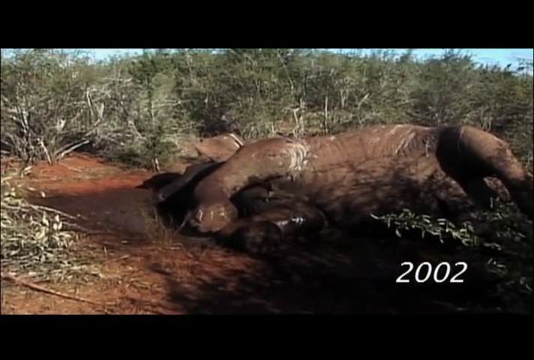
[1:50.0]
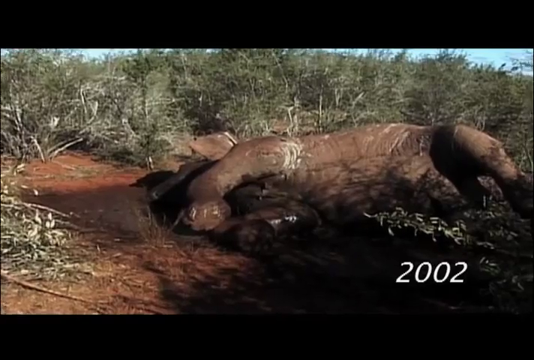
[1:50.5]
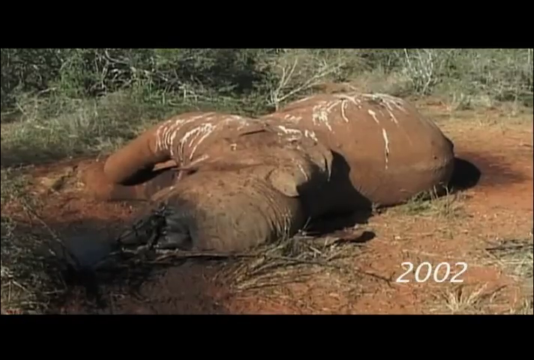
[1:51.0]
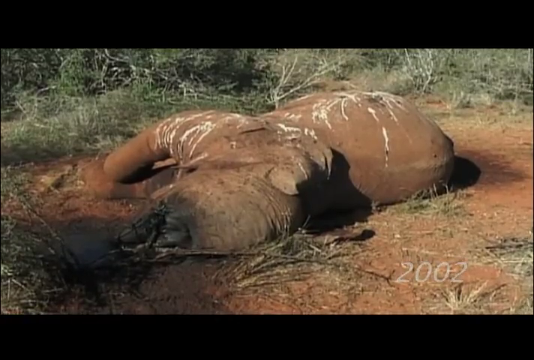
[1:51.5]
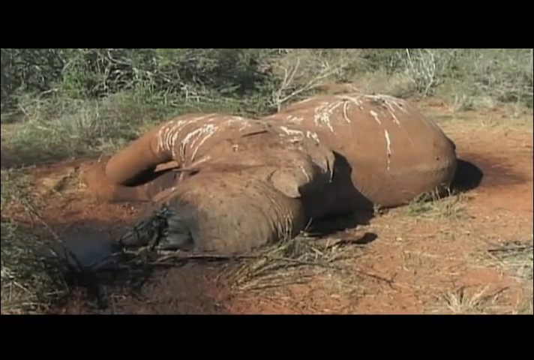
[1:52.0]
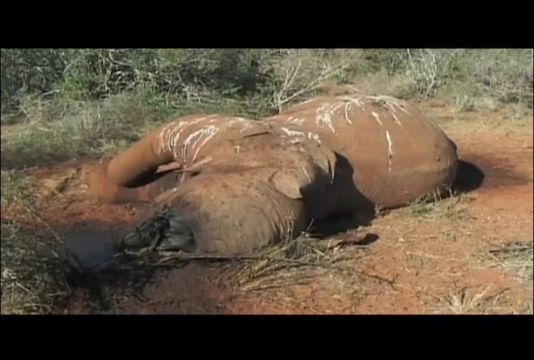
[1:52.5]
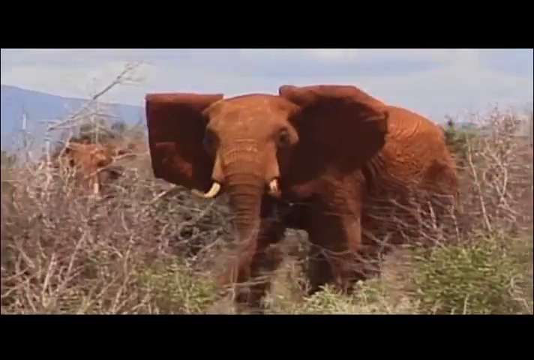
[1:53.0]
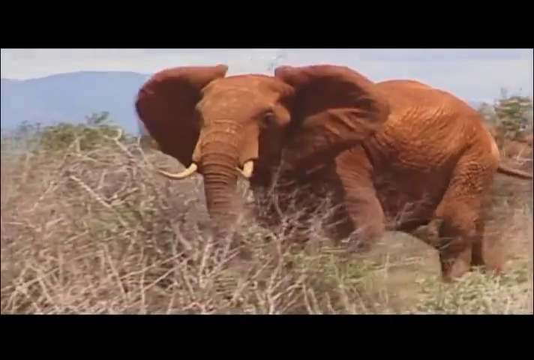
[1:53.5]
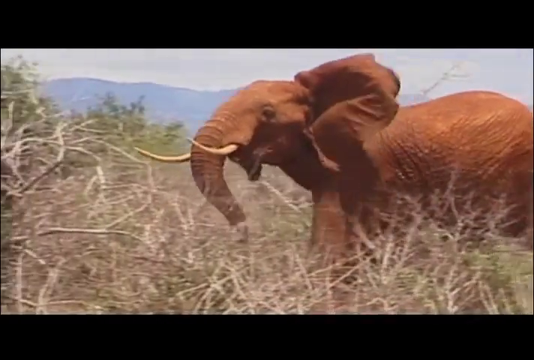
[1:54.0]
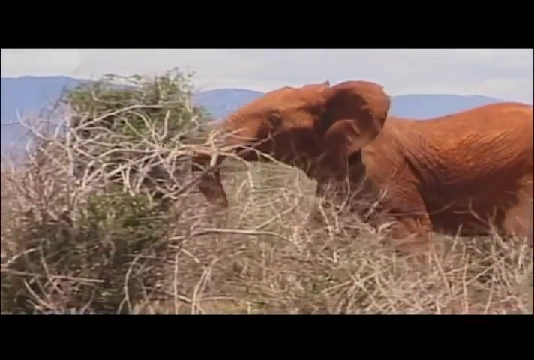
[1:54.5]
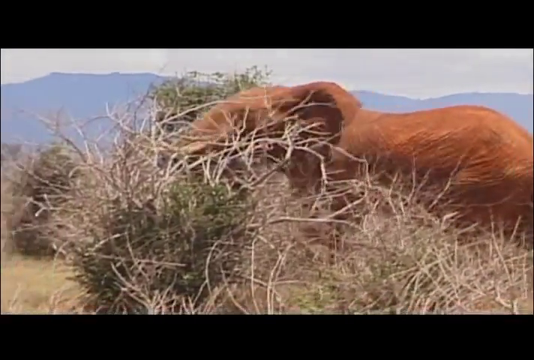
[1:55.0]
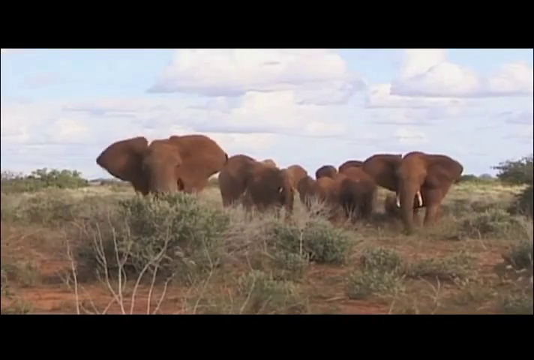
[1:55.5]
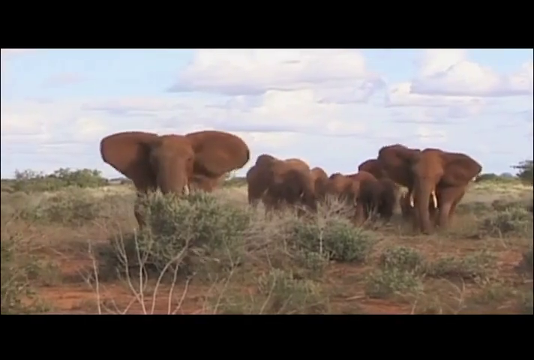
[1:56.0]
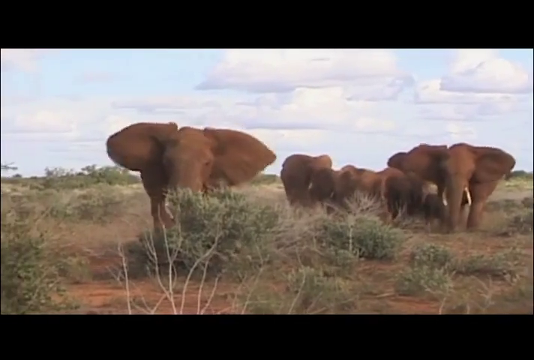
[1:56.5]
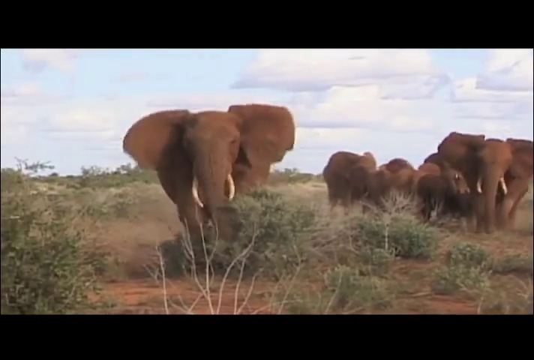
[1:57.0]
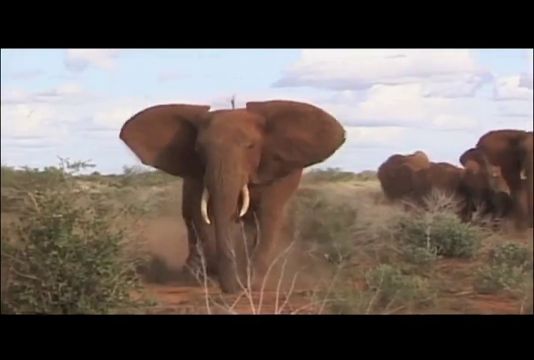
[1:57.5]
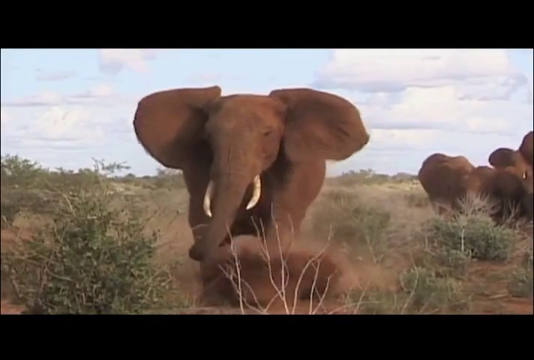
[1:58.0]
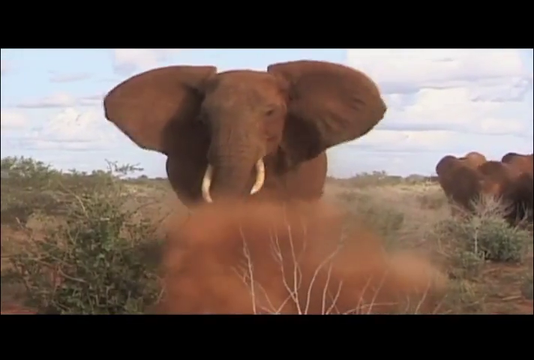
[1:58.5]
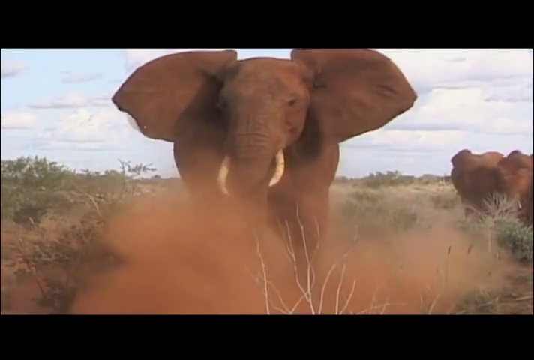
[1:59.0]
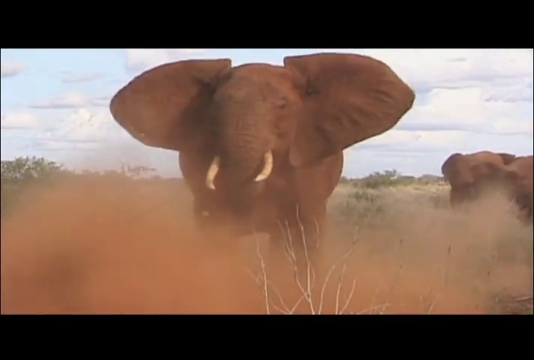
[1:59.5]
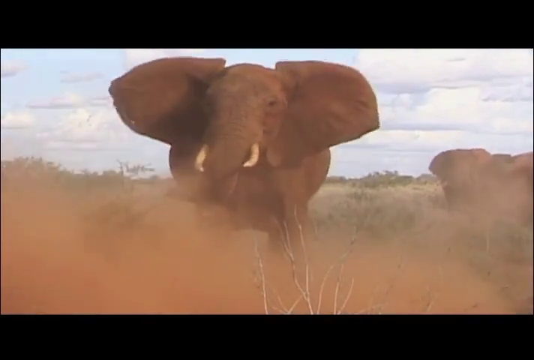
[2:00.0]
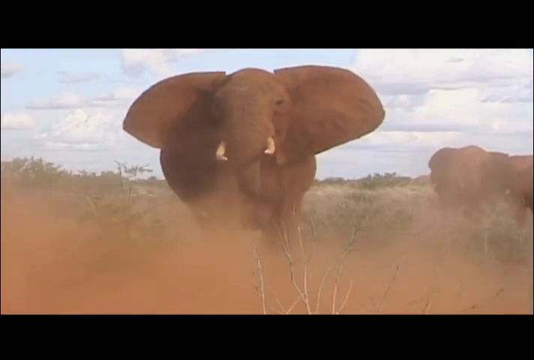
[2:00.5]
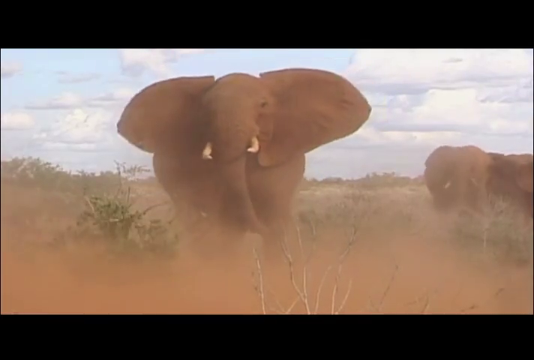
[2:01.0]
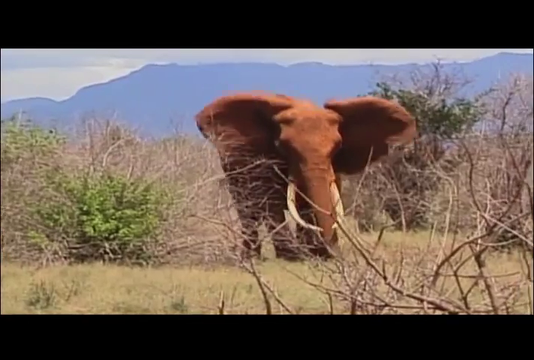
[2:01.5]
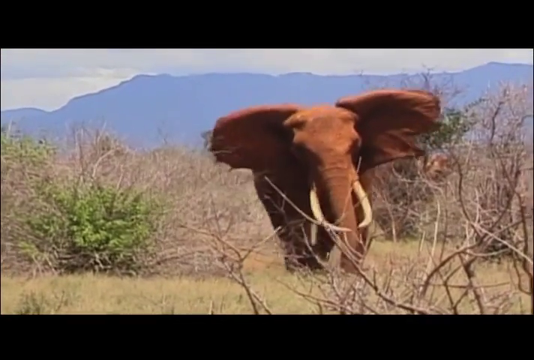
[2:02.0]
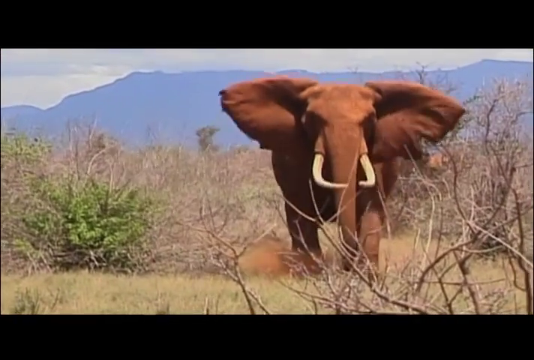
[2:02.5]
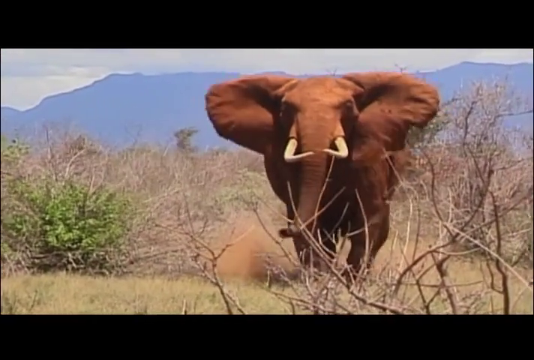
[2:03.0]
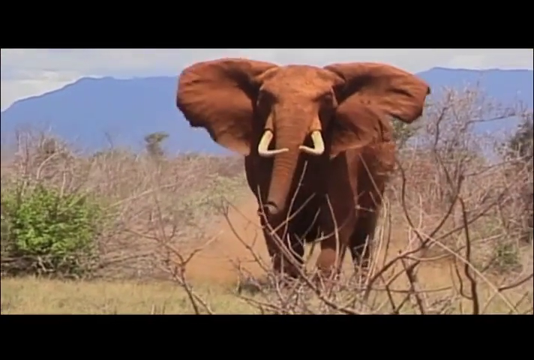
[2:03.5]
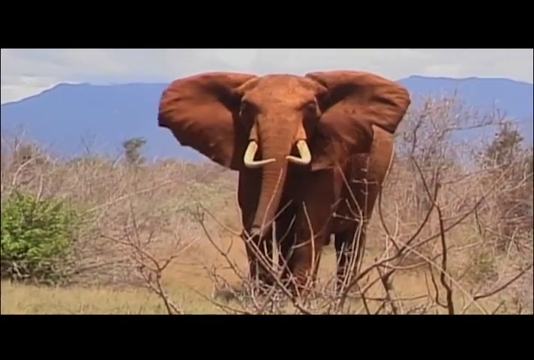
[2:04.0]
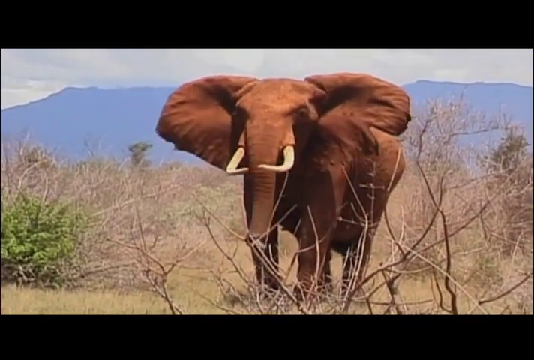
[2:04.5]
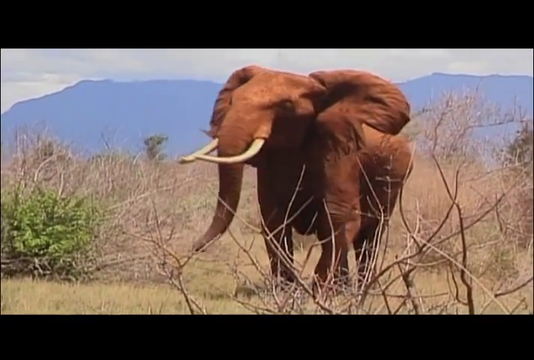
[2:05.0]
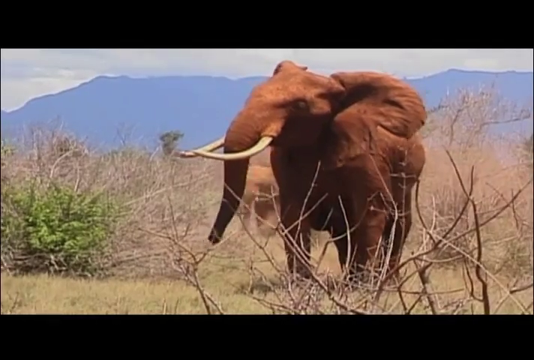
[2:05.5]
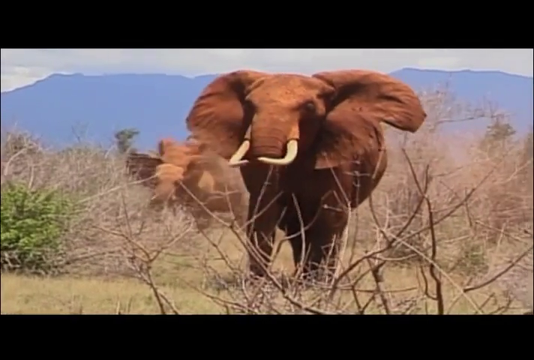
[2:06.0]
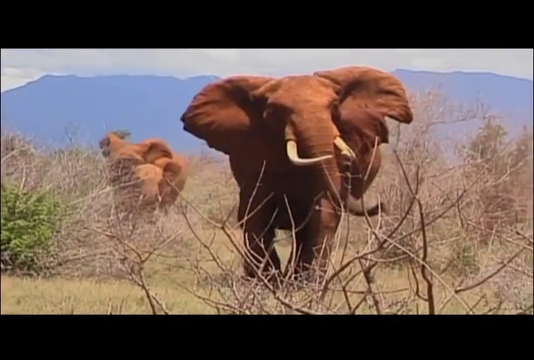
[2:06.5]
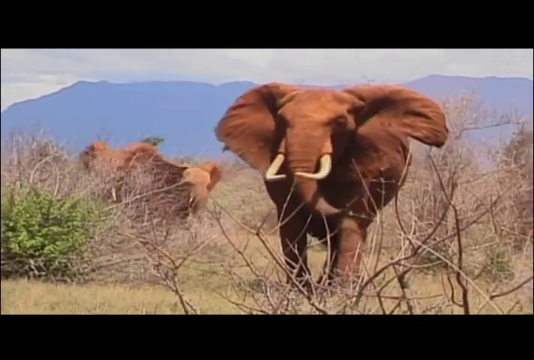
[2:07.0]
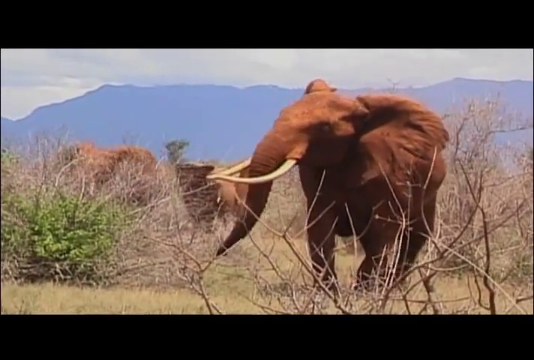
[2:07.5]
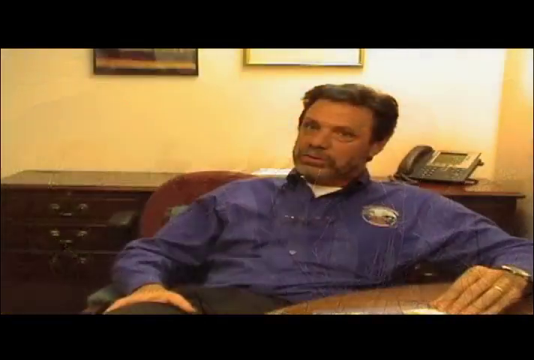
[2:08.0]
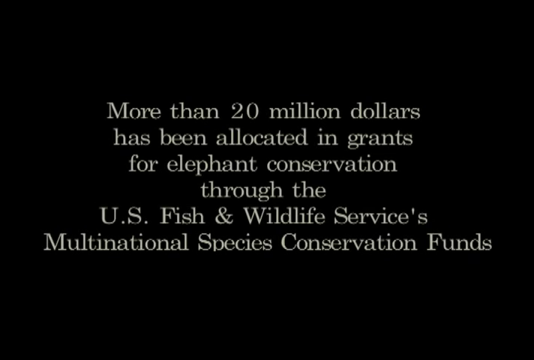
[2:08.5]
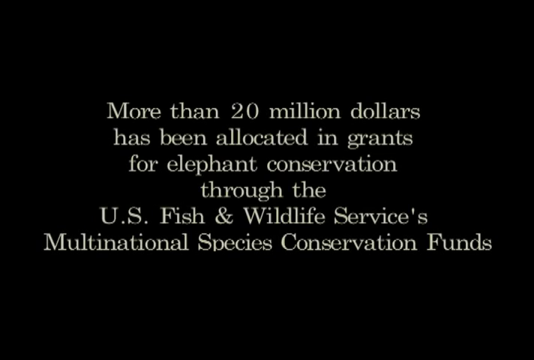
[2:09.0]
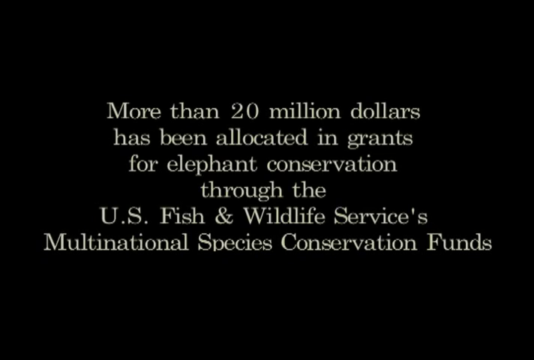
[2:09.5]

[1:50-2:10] Closer images show the dead elephants on the ground, which appear to have bird fecal material all over them. The video then shows what may be a live bull elephant trumpeting, ears flapped wide, enraged and trotting toward the camera with a herd of elephants. The same bull comes toward the camera, furious, charging at the people with the camera, with at least one or two mothers and at least one baby elephant following him. There is a quick flash of the man in the office sitting in the chair speaking, and then the screen goes black with white text reading "More than $20 million has been allocated in grants for elephant conservation through the U.S. Fish and Wildlife Service's Multinational Species Conservation Funds."